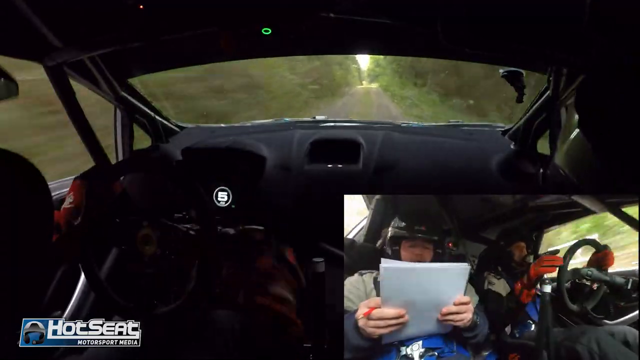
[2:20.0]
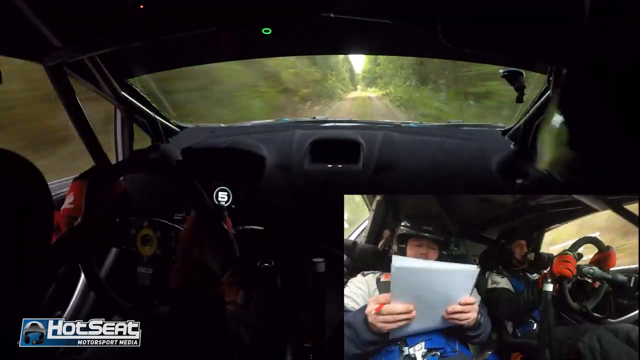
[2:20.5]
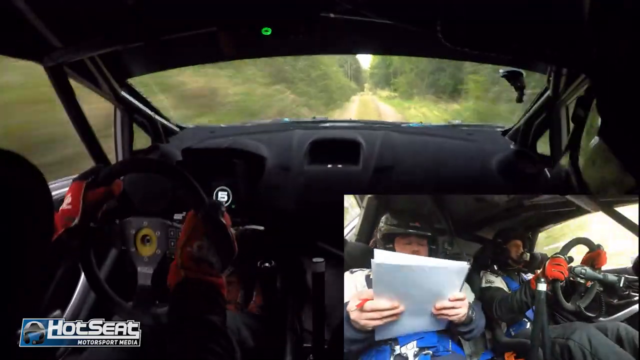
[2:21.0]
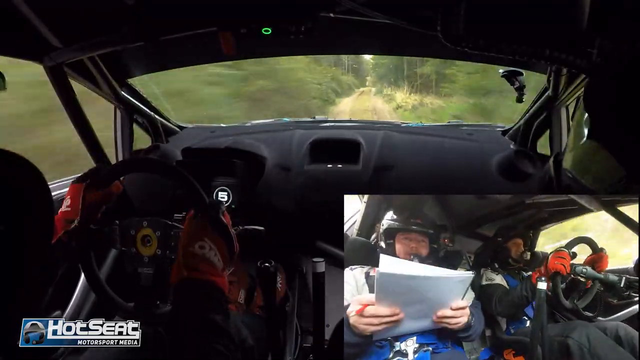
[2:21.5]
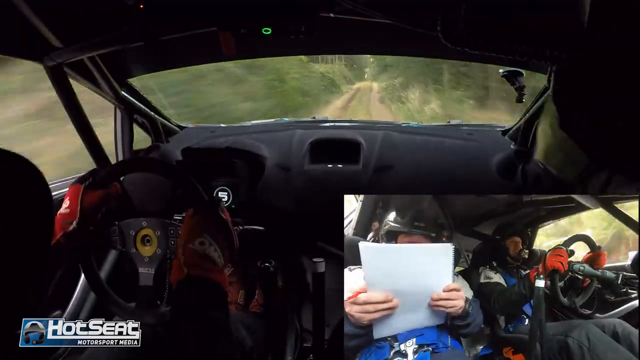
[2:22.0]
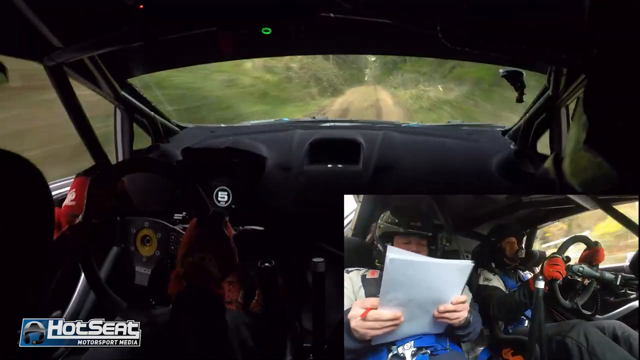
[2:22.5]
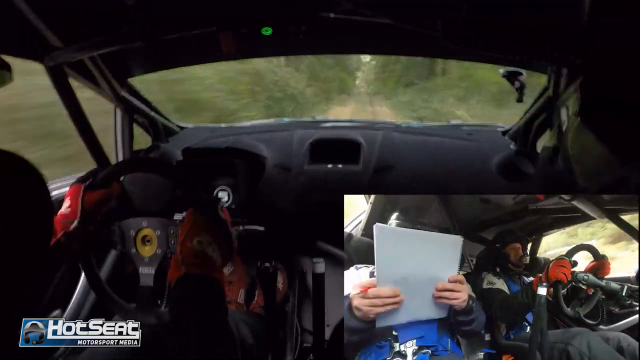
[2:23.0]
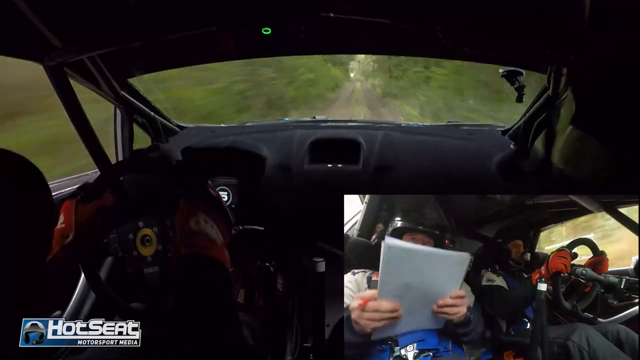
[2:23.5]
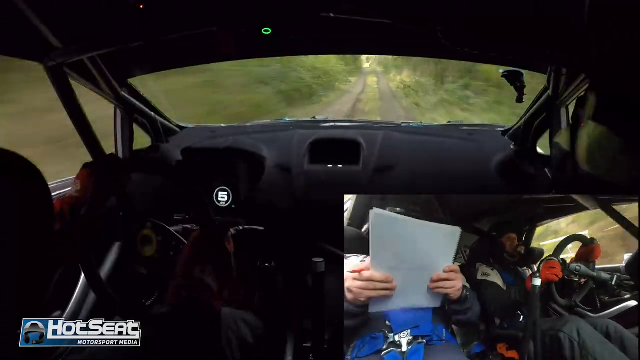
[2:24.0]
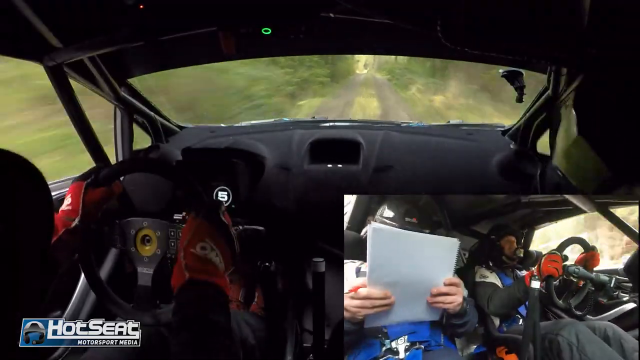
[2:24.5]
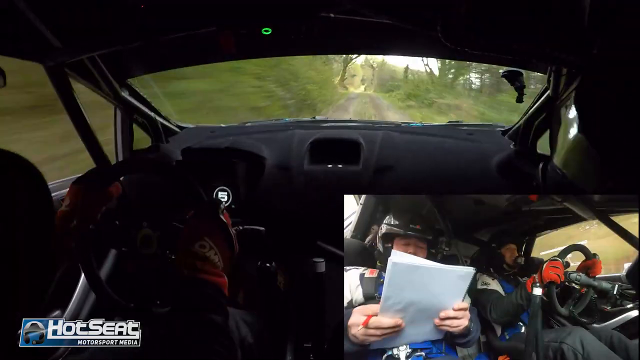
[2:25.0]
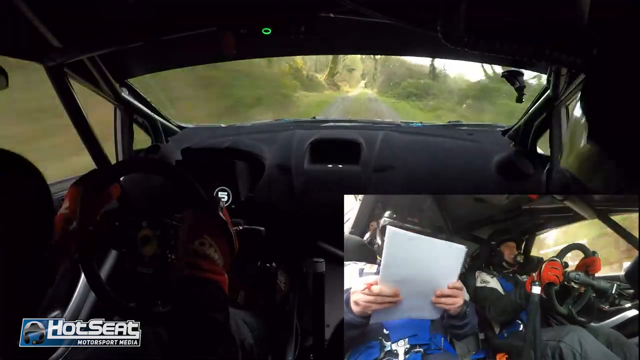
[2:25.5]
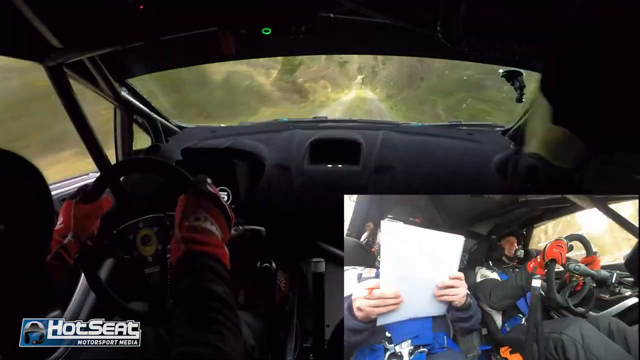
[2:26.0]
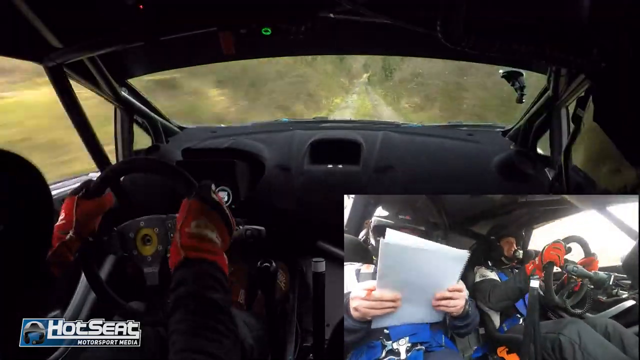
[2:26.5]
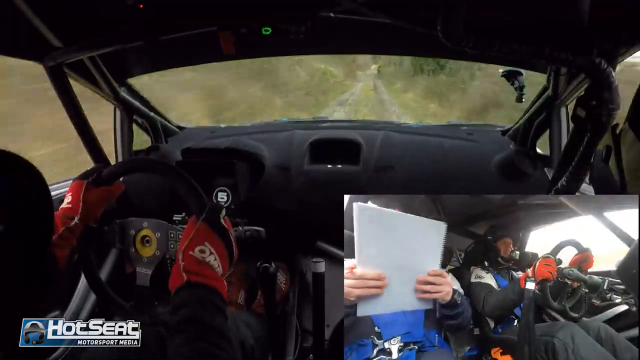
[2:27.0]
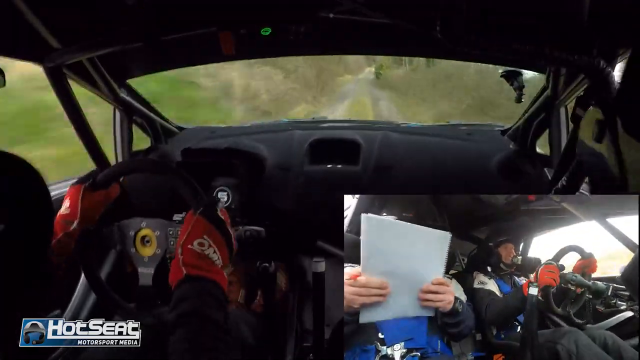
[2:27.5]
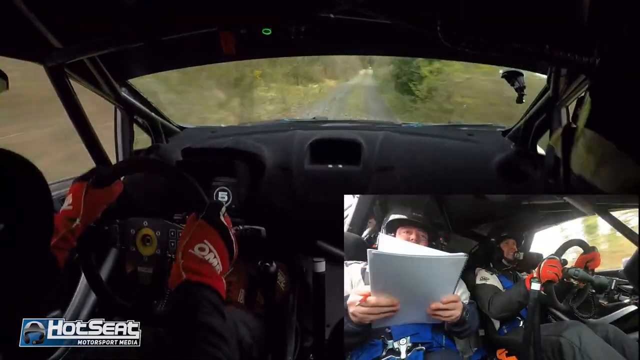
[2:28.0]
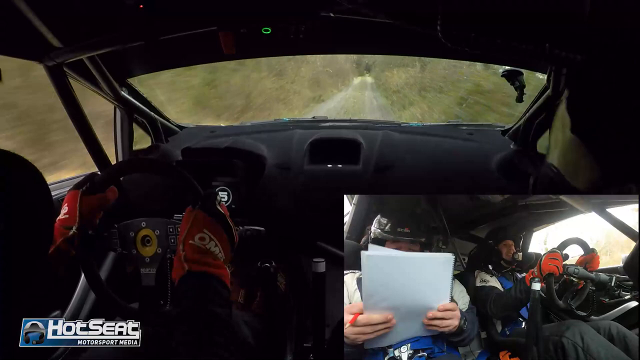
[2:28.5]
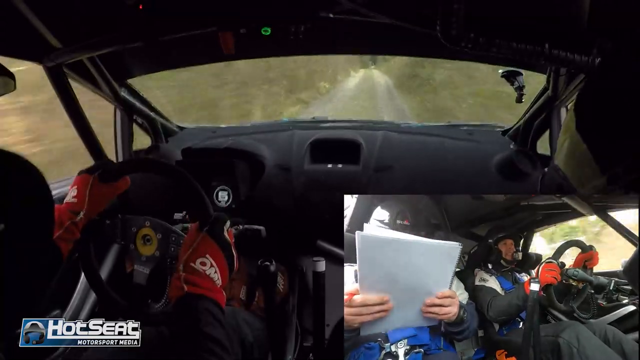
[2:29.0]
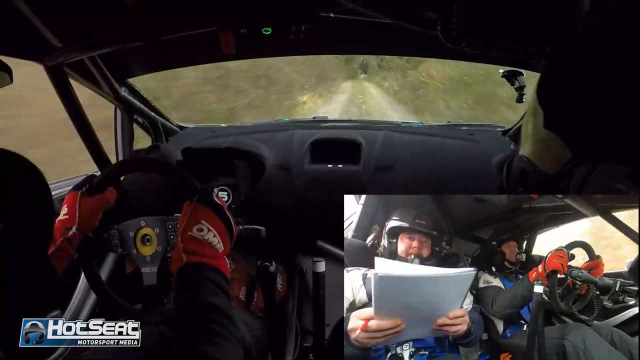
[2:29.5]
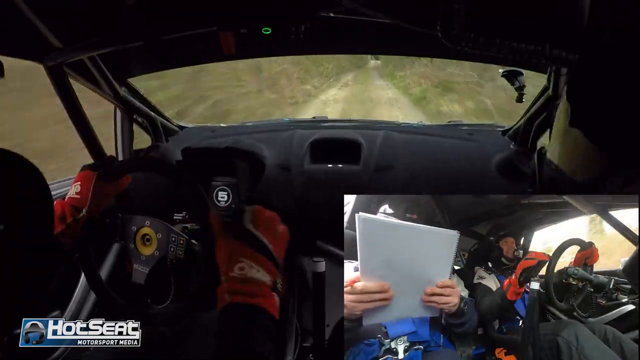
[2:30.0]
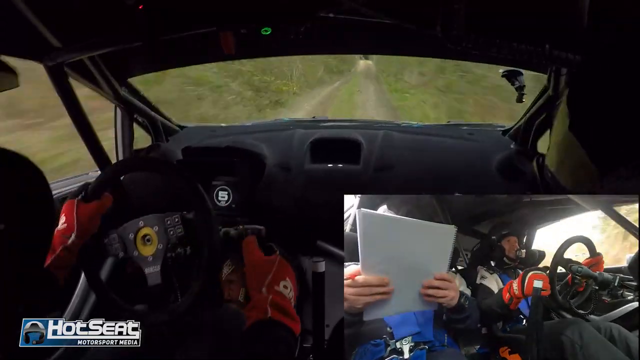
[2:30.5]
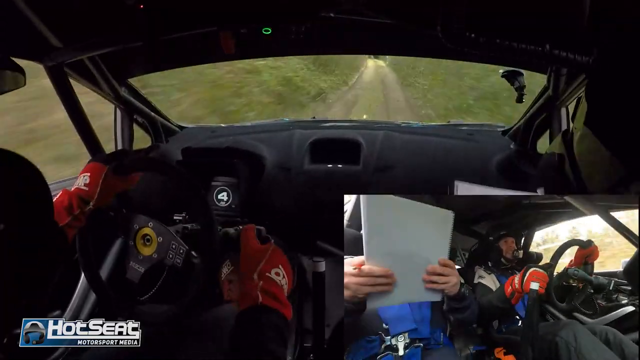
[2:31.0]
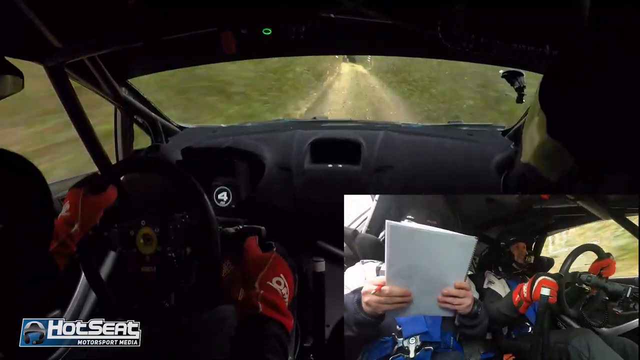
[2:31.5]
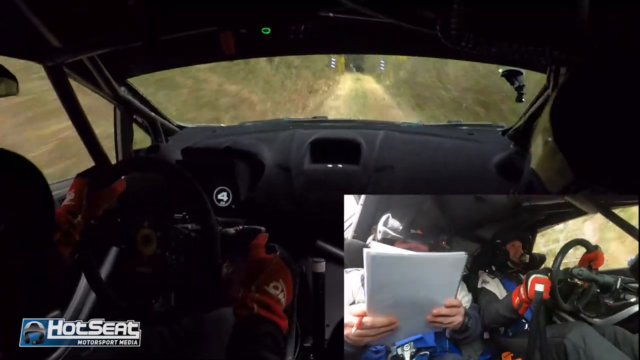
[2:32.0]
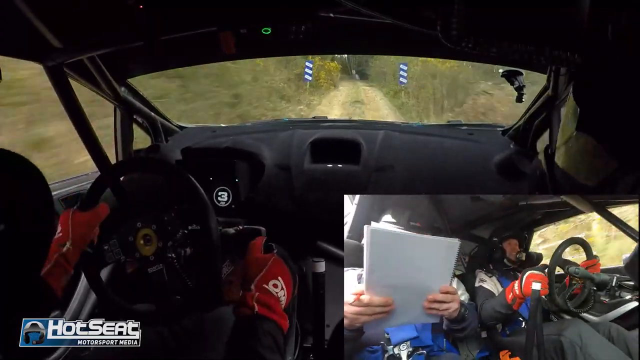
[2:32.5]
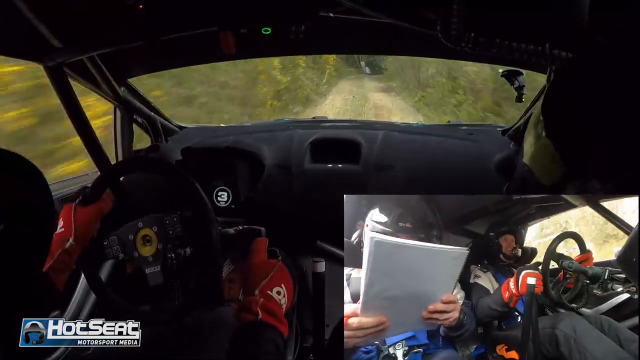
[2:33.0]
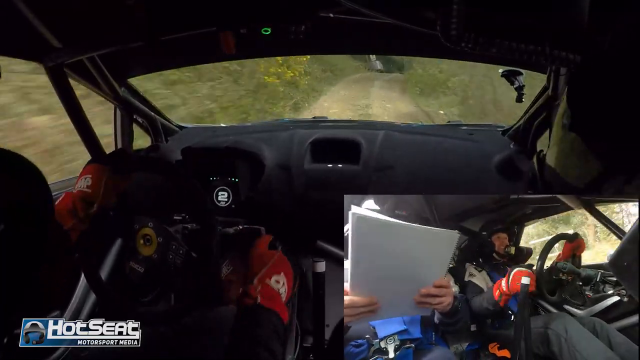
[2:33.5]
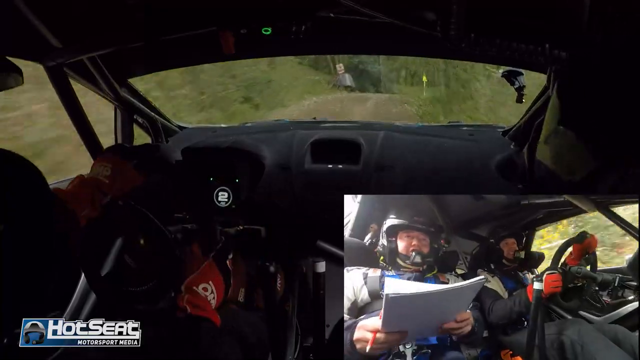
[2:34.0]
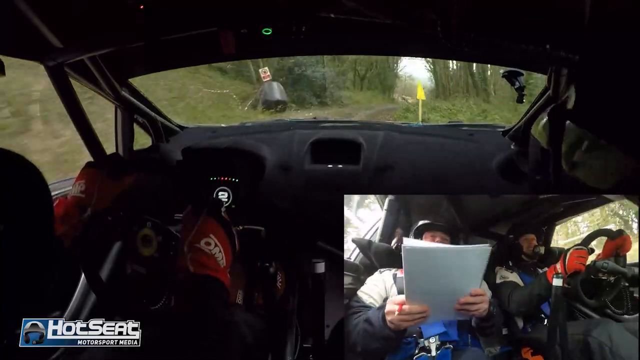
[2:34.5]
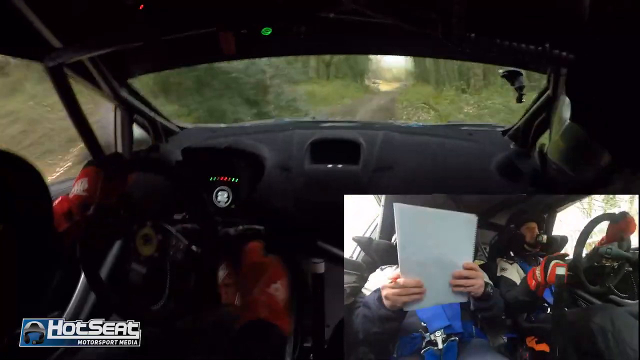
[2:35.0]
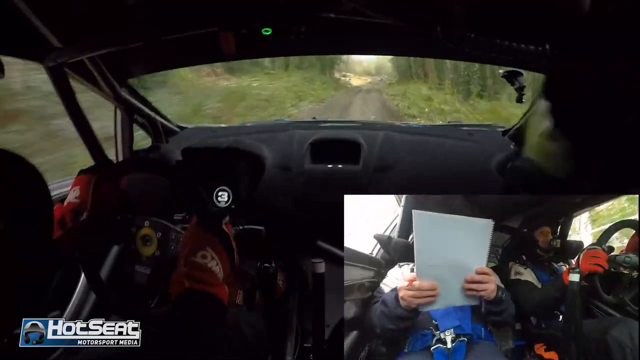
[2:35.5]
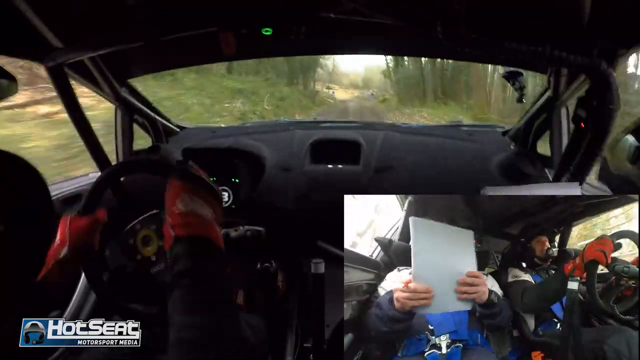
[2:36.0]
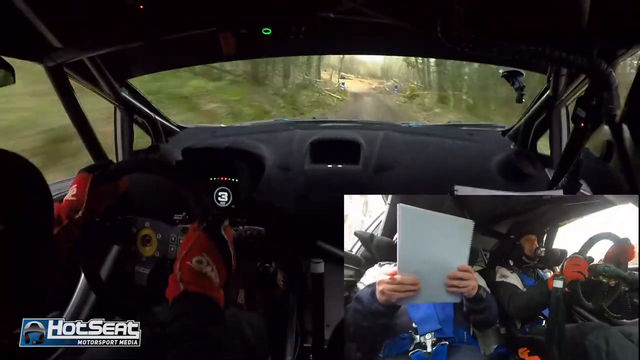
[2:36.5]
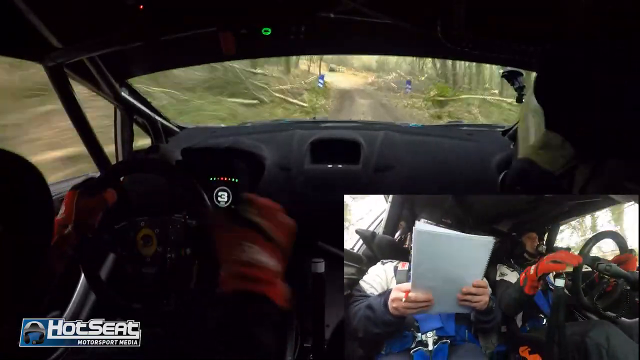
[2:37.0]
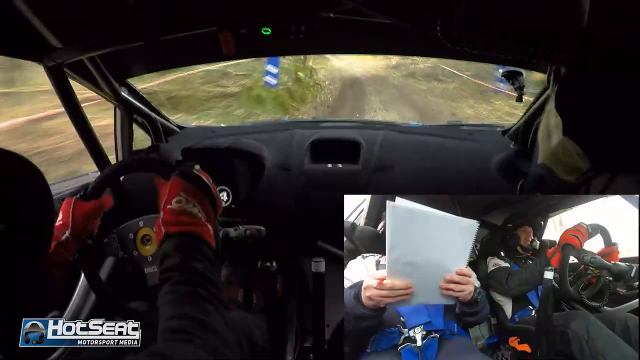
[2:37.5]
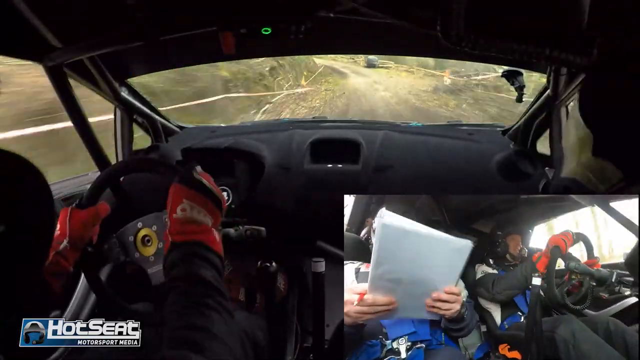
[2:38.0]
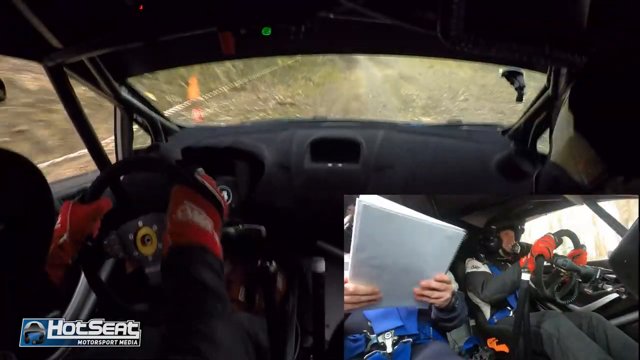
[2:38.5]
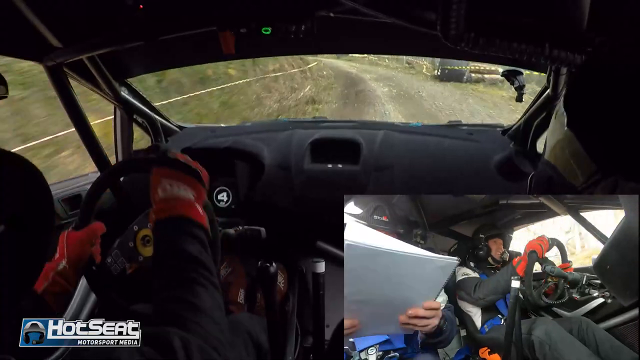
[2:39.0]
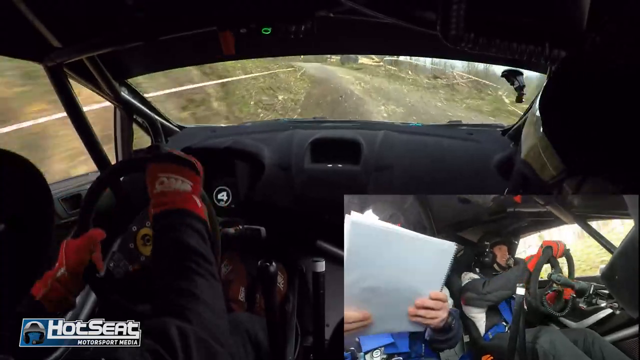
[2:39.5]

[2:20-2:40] The men keep driving, apparently at a very fast speed, as the scenery outside seems to go by faster. A digital number display changes from two to three to four and then five. Little can be seen at the sides. At one point some dark blue signs or similar things appear and the car speeds past them, and then a yellow sign appears. The vegetation thins out again, and they reach a section that is more cleared. The camera inside the vehicle shows mostly the two men, with little of the outside visible. The driver is very focused on driving, and the other man still has the papers in his hand along with the pencil, but is not doing anything with them.